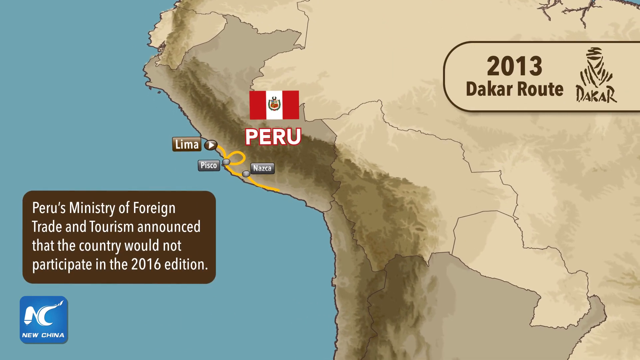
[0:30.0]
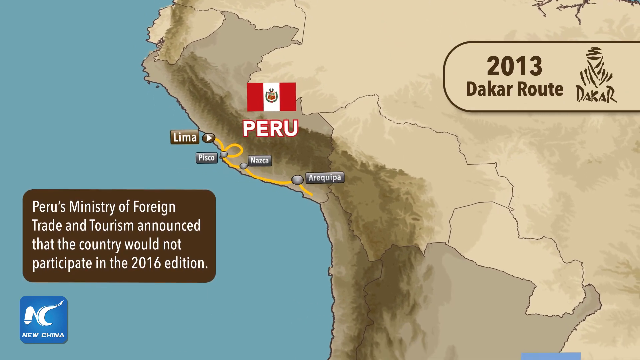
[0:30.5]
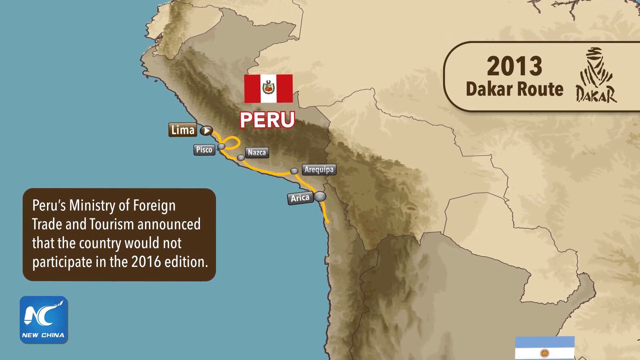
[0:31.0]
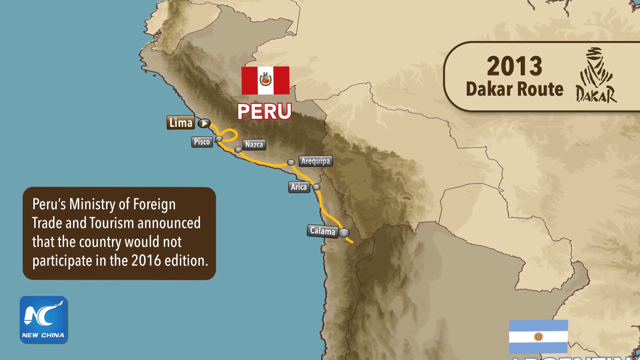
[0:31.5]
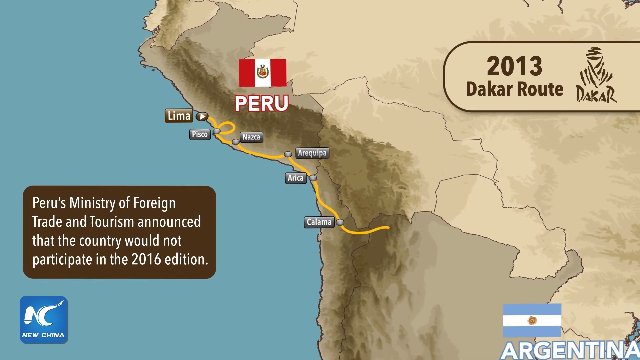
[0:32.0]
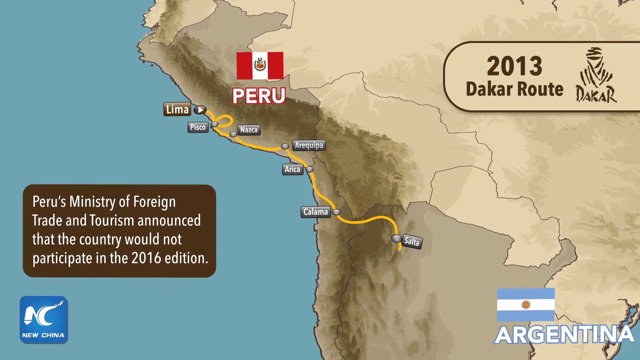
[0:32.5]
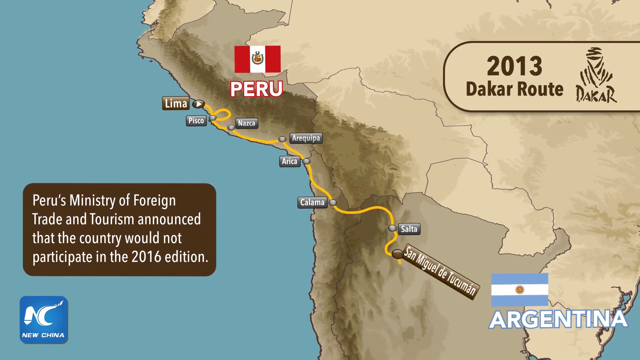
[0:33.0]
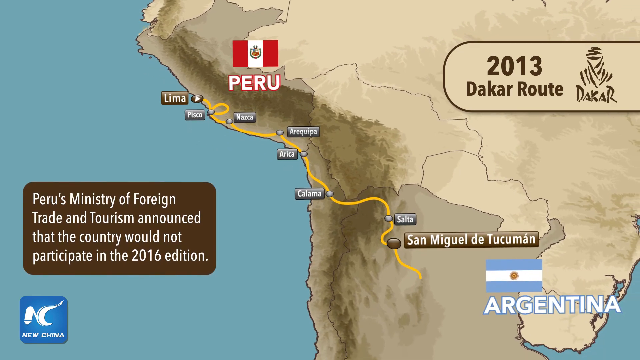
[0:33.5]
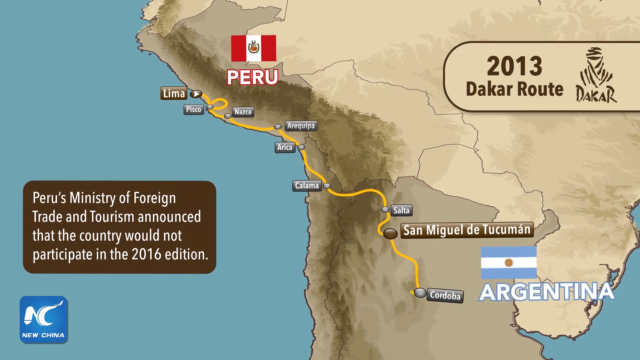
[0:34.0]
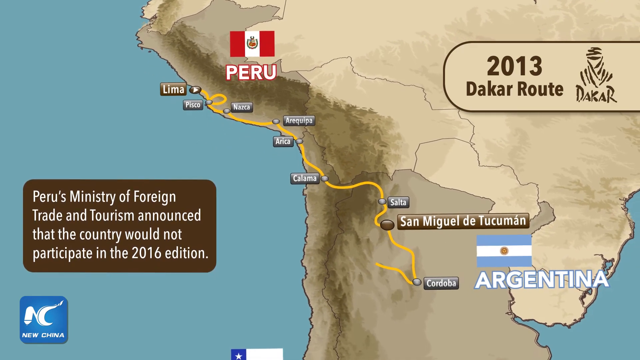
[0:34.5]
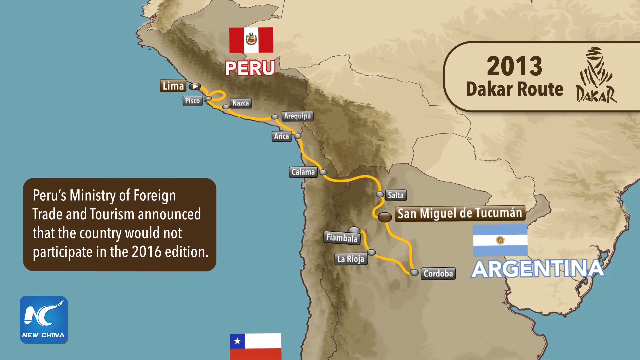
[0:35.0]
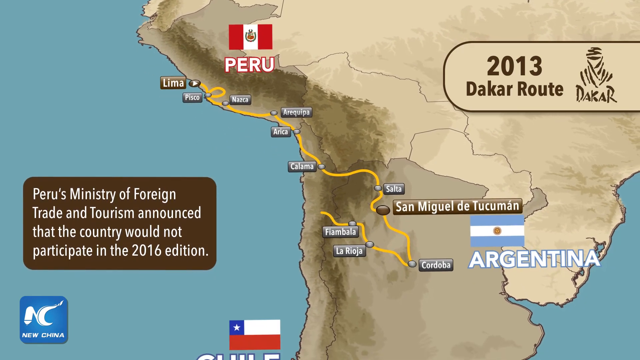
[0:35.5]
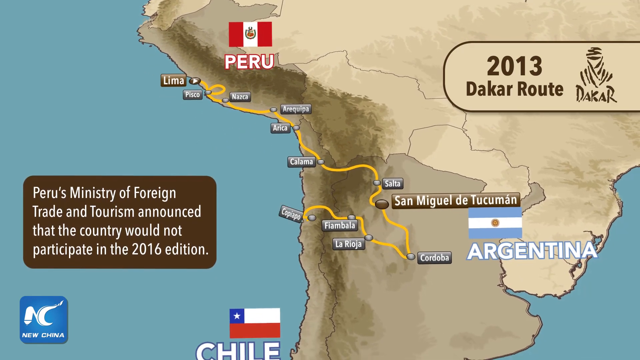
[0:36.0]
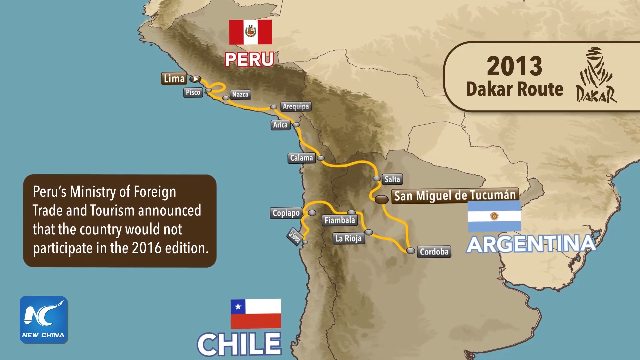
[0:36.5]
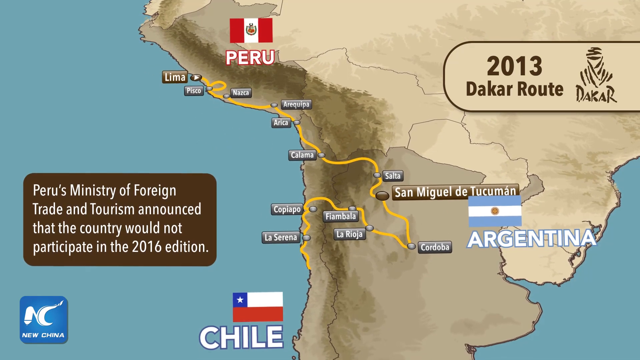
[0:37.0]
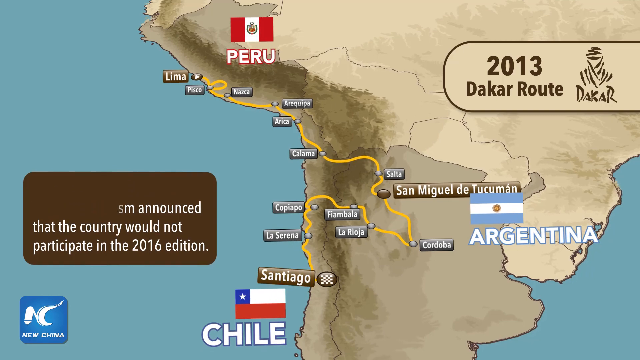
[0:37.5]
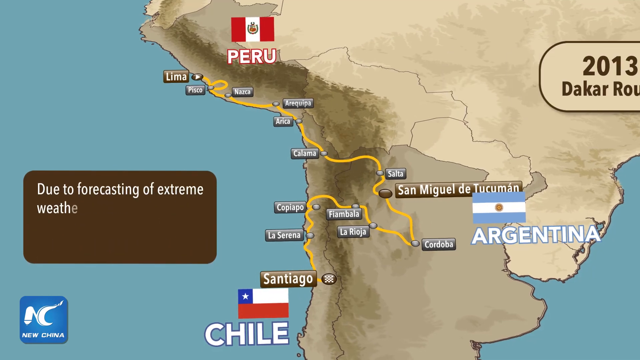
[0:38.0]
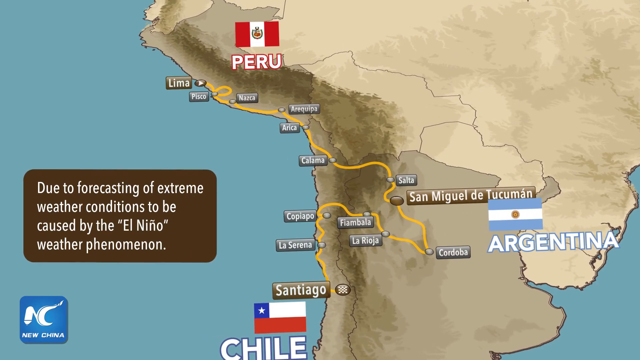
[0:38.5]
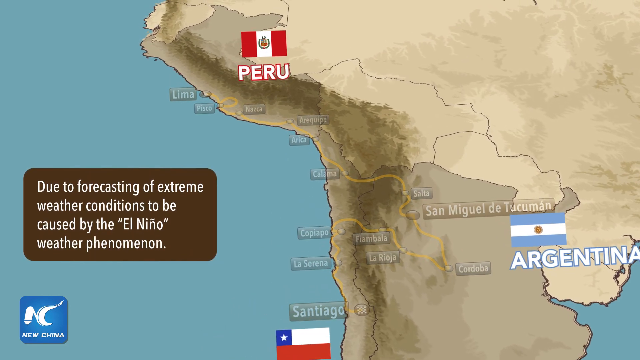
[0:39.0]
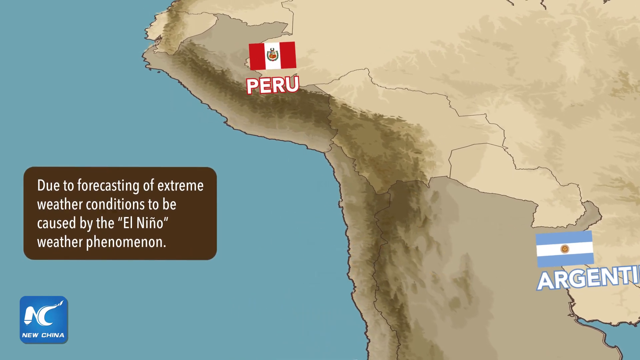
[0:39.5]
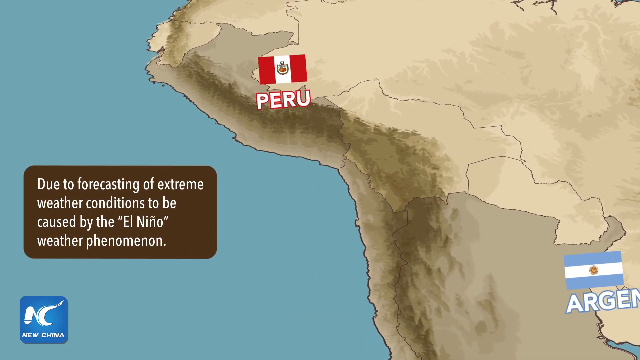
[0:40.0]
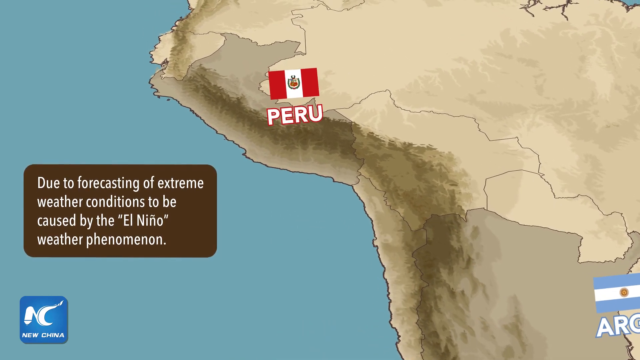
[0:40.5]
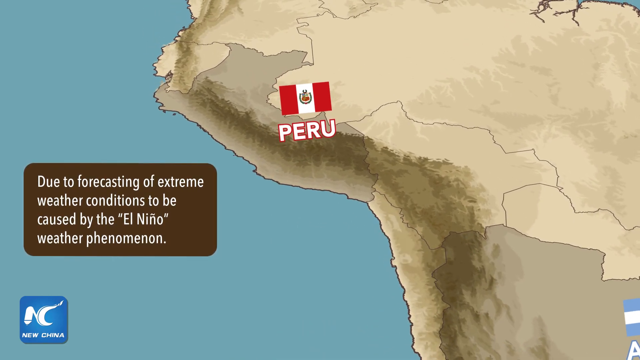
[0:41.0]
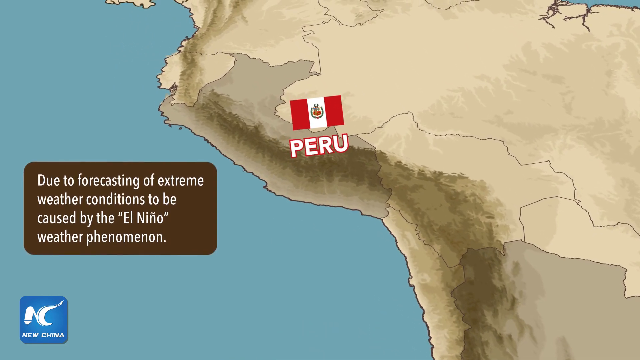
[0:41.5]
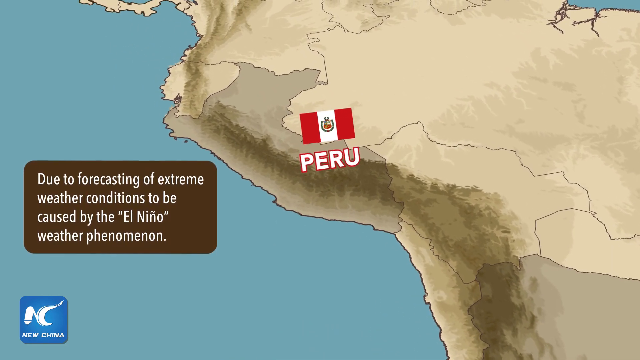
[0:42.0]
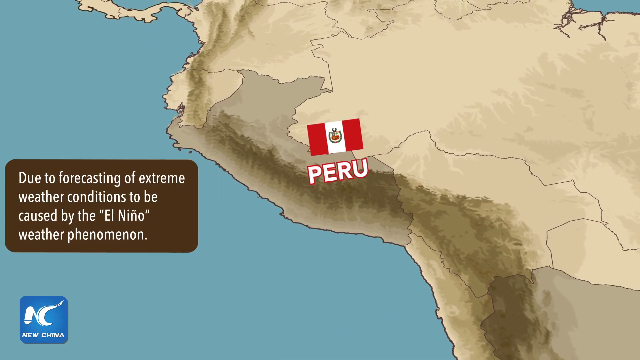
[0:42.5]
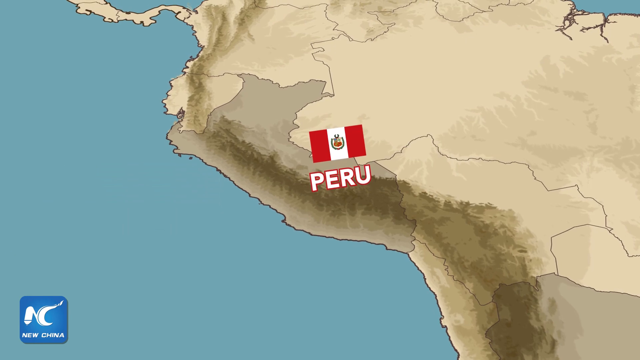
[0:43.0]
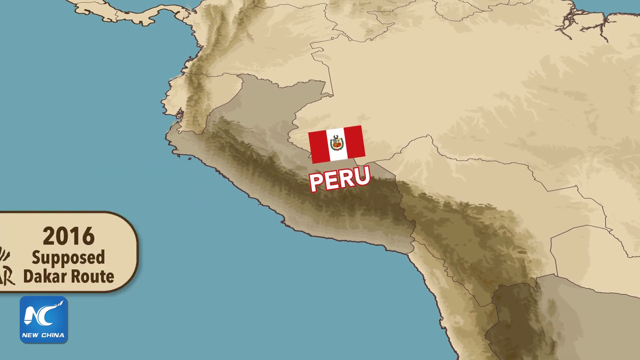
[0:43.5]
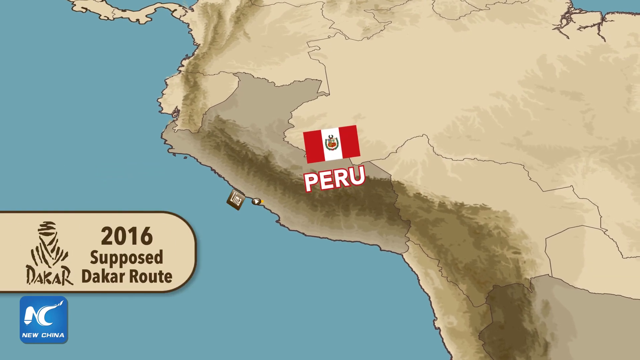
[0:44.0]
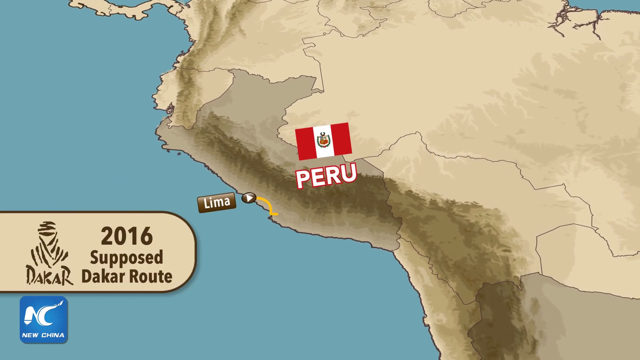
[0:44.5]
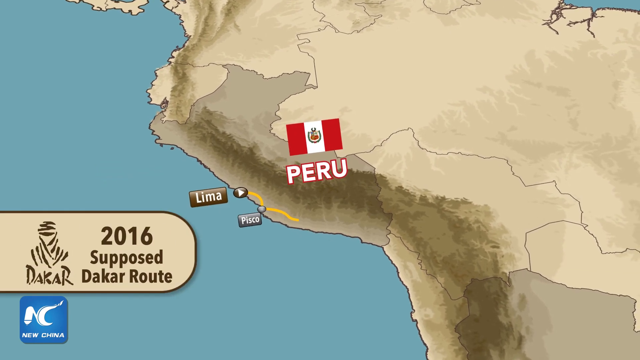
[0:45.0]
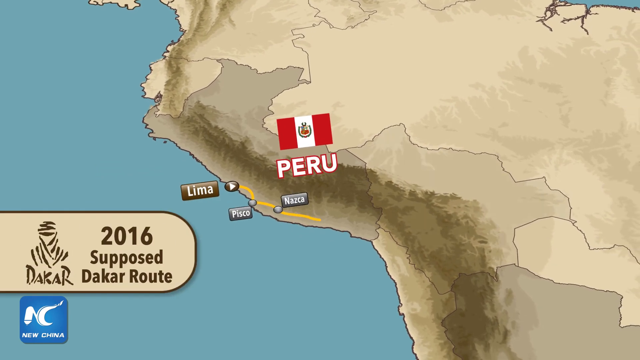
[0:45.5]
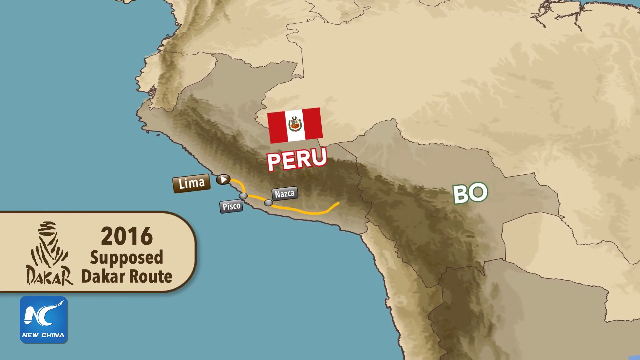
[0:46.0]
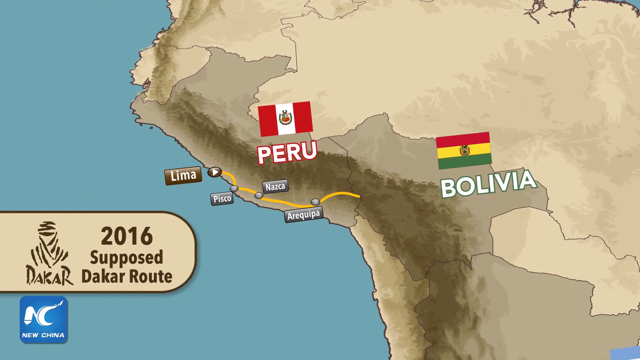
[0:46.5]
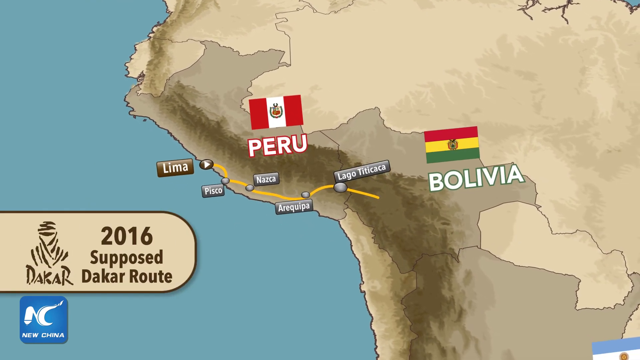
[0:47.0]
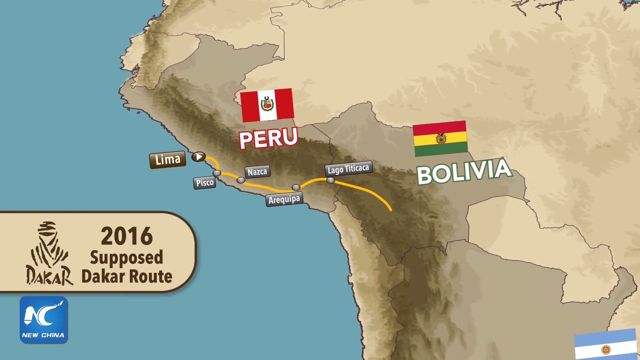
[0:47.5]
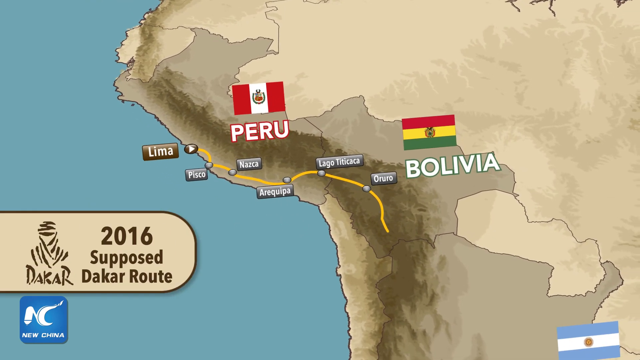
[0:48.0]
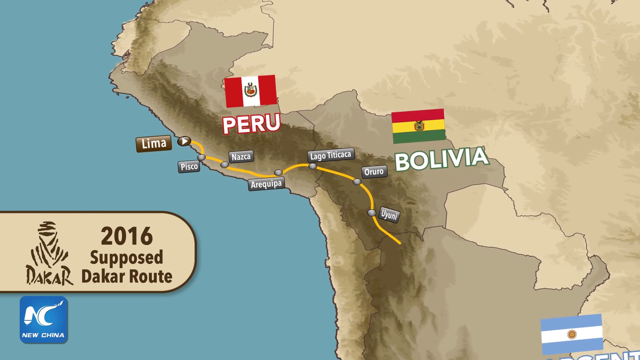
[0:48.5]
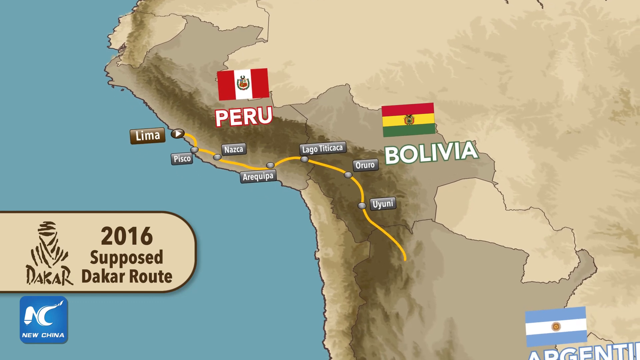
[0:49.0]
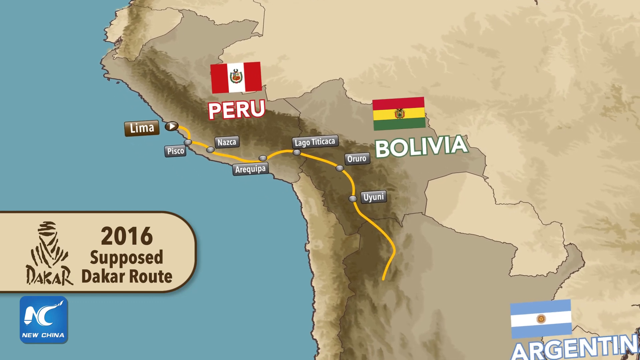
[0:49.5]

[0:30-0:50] Text reads "Peru's Minister of Foreign Trade and Tourism announced that the country would not participate in the 2016 edition". The map shows "2013 Dakar route" with "Peru" and then "Lima" and a couple of other places. Dark blue represents the water and the tan part of the map is the land. More animated cities pop up, including Saltia or Salta, and a yellow marking comes down the map. Argentina pops up with its blue and white flag. Peru's flag is red and white, and Chile's flag is red, white and blue. The map goes back to the Peru area with "Lima", and a small graphic on the left side reads "2016 supposed Dakar route". Other small cities pop up. Bolivia pops up with a red, yellow and green map or flag.